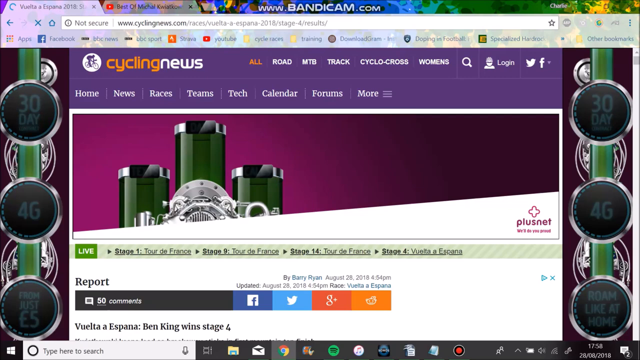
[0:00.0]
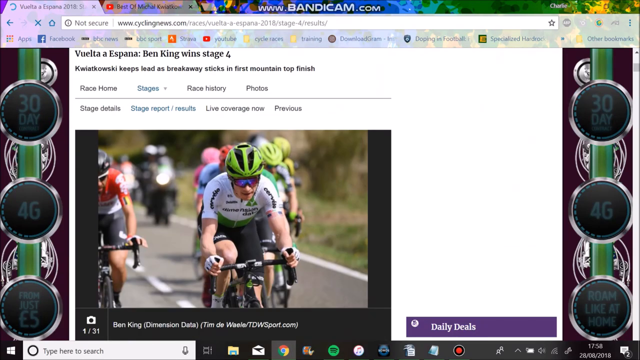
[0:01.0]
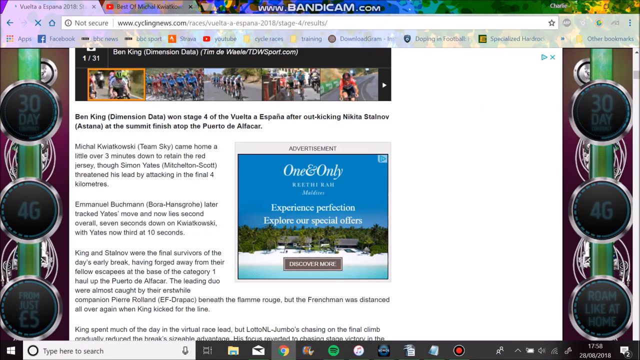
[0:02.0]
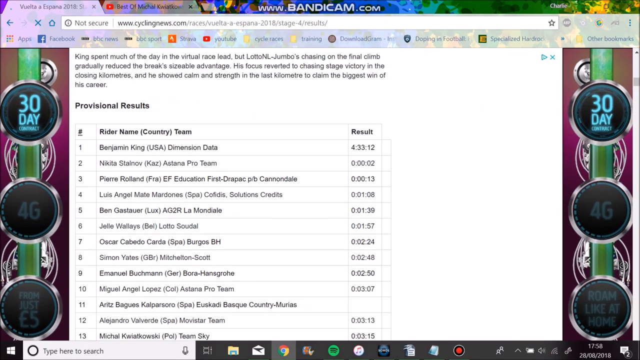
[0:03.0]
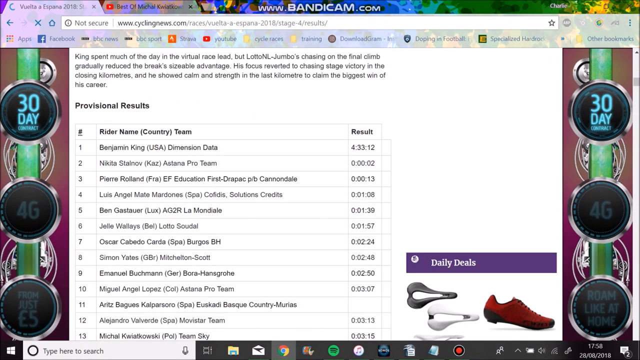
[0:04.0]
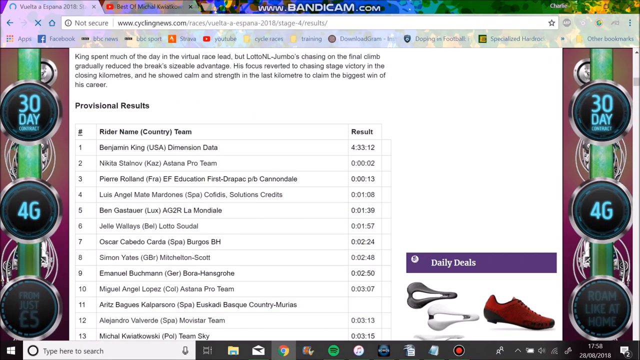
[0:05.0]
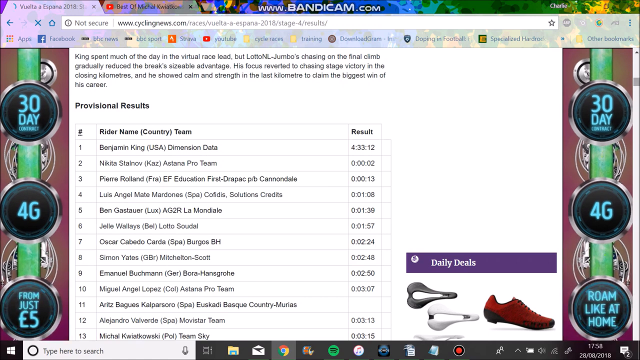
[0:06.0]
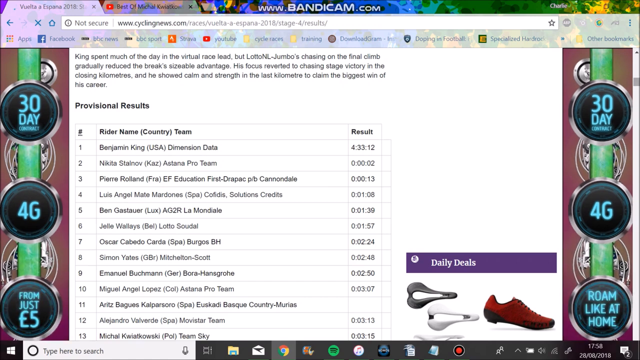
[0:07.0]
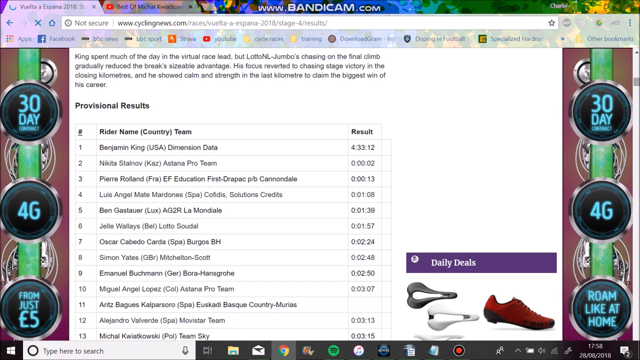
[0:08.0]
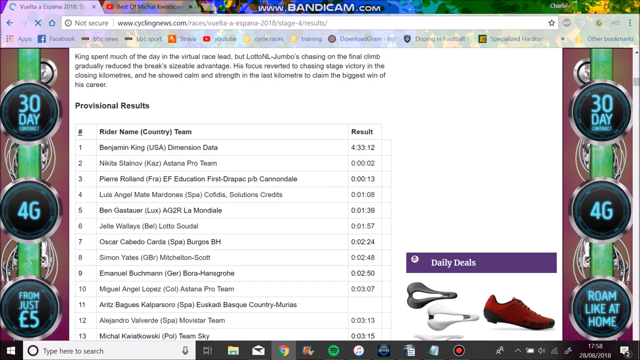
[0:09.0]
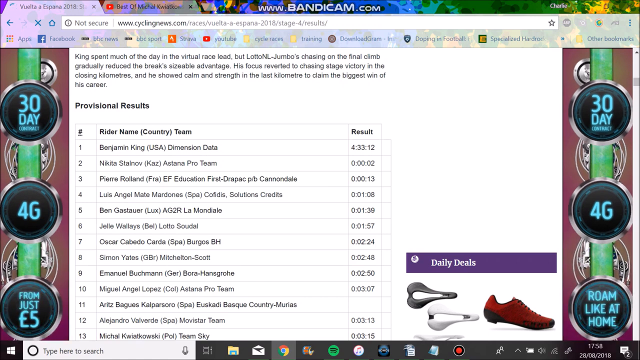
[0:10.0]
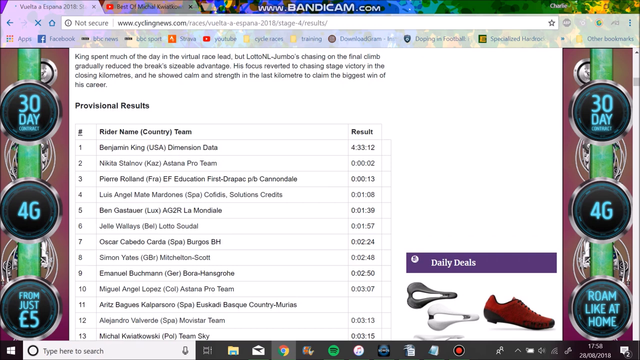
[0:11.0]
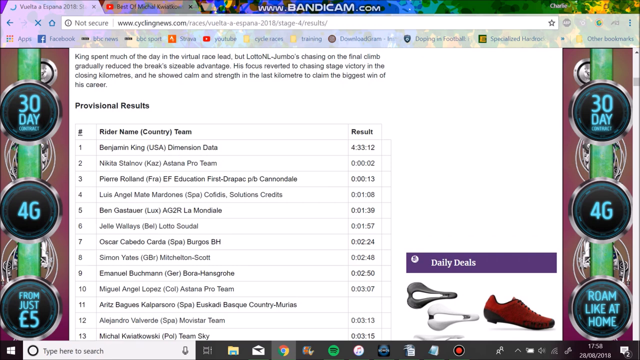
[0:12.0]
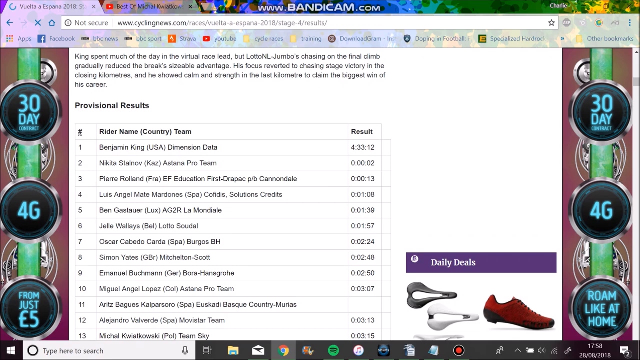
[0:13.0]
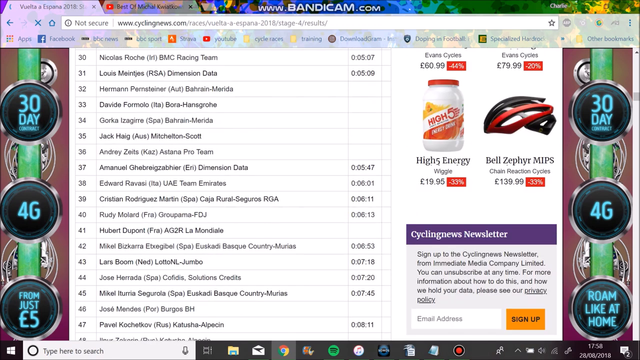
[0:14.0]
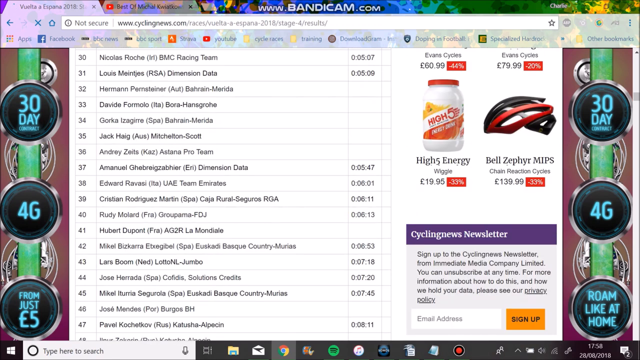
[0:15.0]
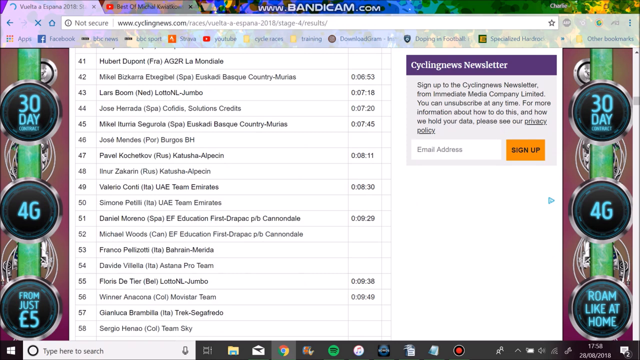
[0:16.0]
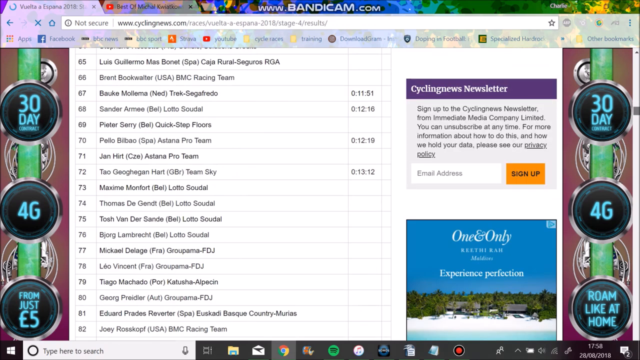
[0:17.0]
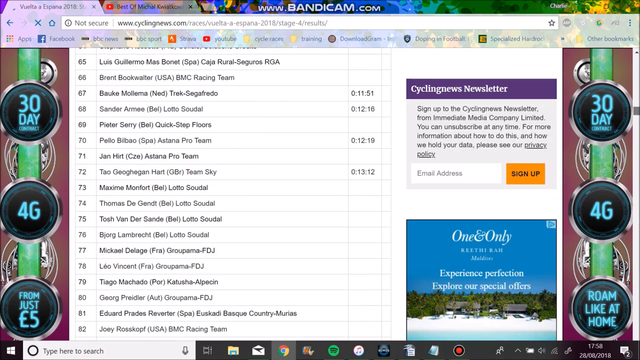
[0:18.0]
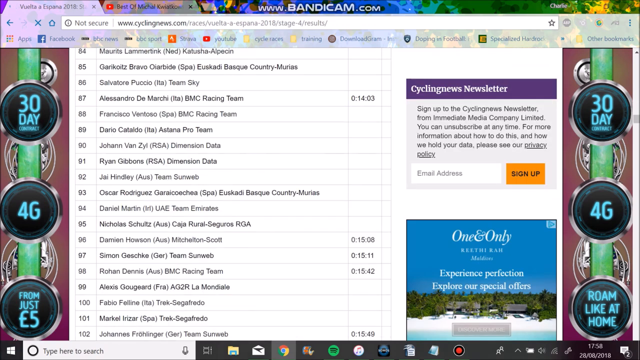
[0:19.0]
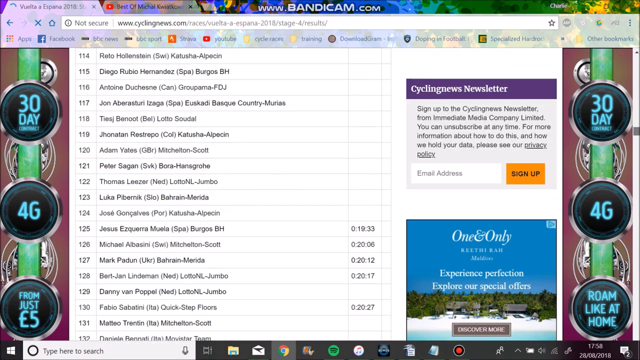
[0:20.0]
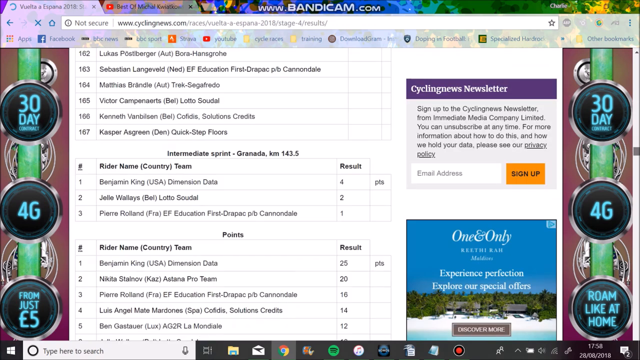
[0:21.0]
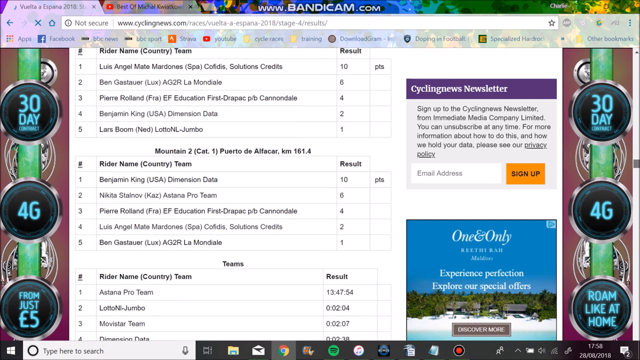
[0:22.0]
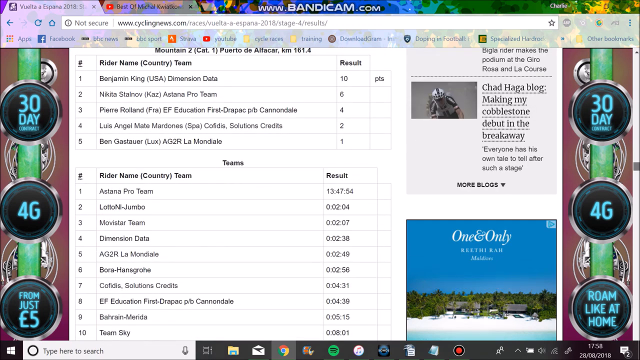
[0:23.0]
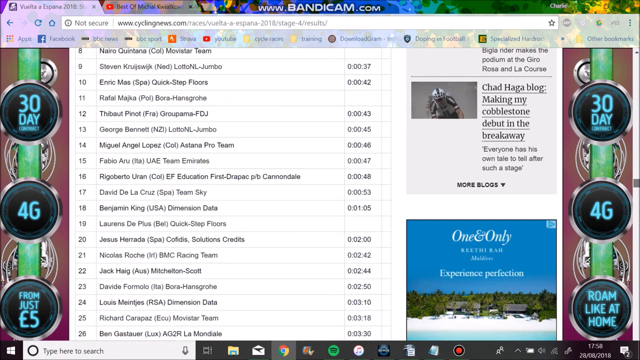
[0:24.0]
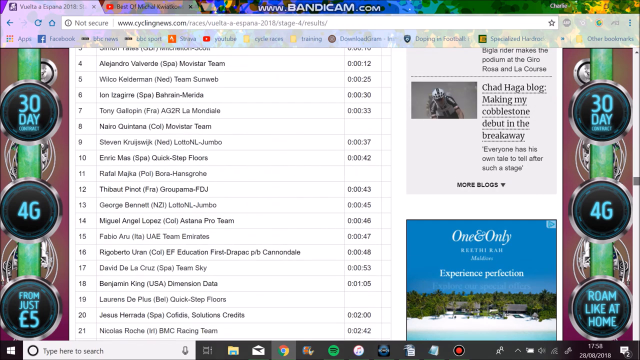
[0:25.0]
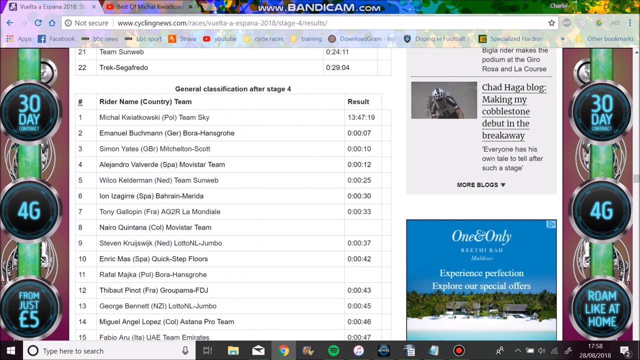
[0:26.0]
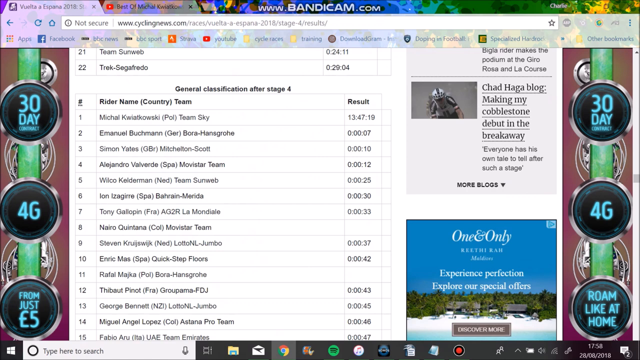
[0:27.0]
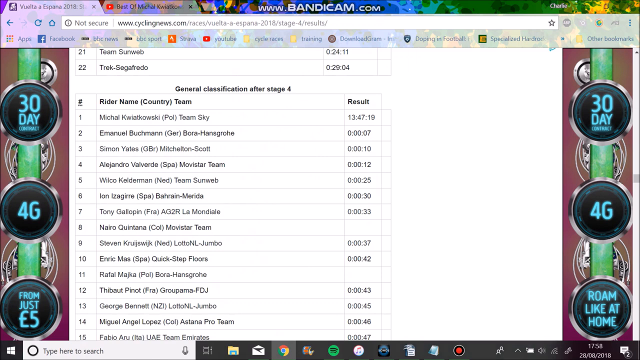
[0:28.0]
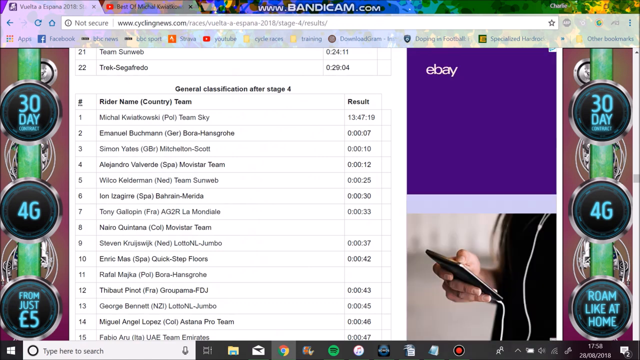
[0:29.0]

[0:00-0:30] A website is displayed in Google Chrome, with the address reading "cyclingnews.com race/races/hispania 2018 stage 4 results". Among the tabs shown are "cyclocross women's login home news races teams tech calendar forms more". Below that, three things are standing up on the left side, with text reading "30 days 4g". In the center of the page the text reads "live stage 1 port-au-france stage 9 port-au-france stage 14 port-au-france stage 4", and below that "report 50 comments by barry ryan august 28 2018". As the page scrolls down, a written article appears along with results laid out under the headings "writer name country team", listing entries such as "Benjamin King, Dimension Data, Nikita Steinlauf, Astana Pro Team, Pierre Raudeland".